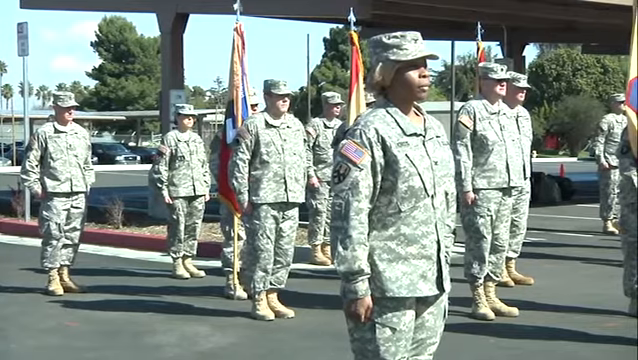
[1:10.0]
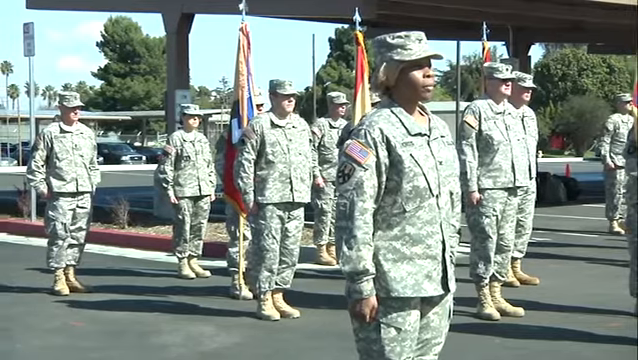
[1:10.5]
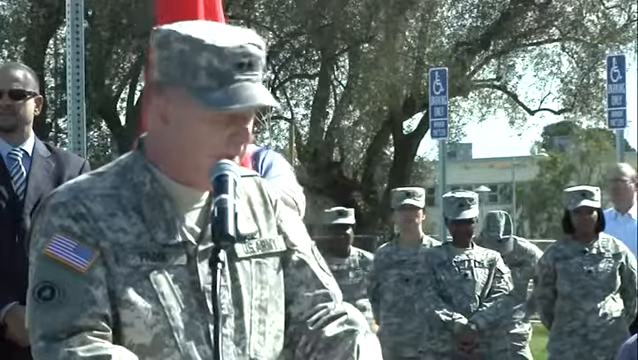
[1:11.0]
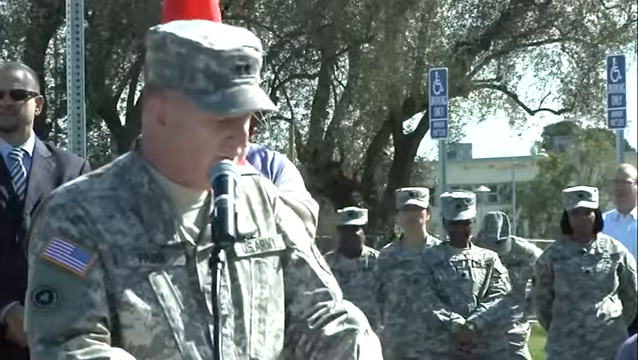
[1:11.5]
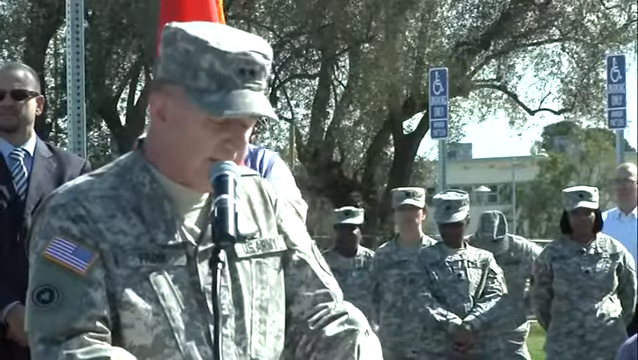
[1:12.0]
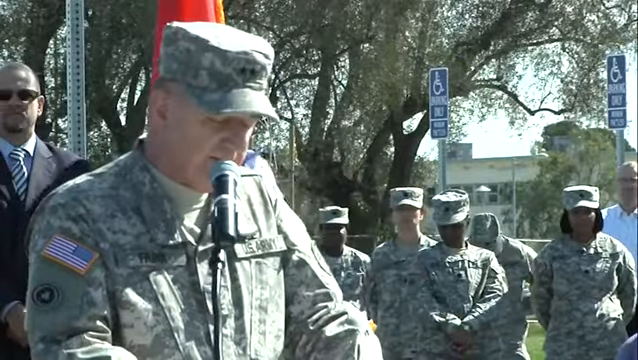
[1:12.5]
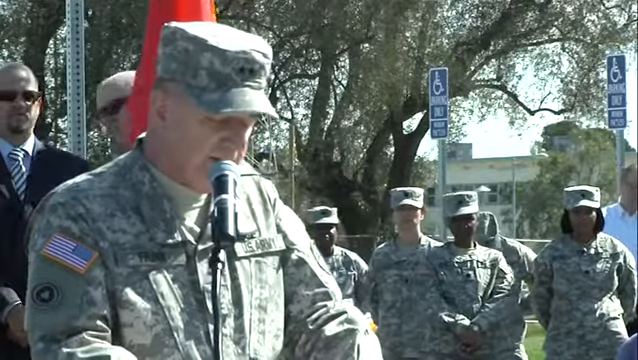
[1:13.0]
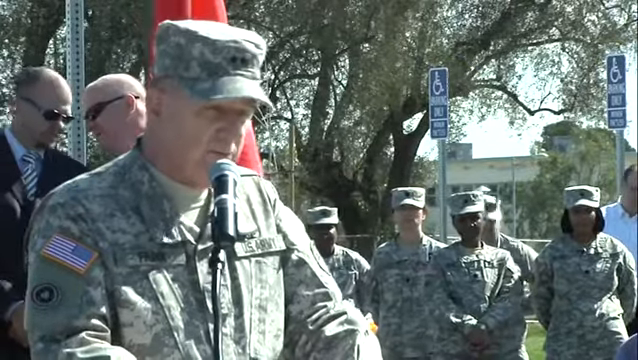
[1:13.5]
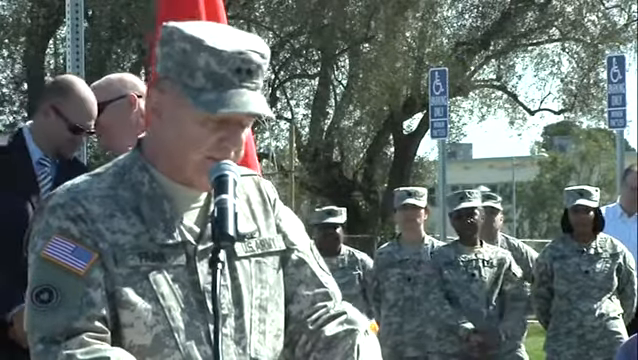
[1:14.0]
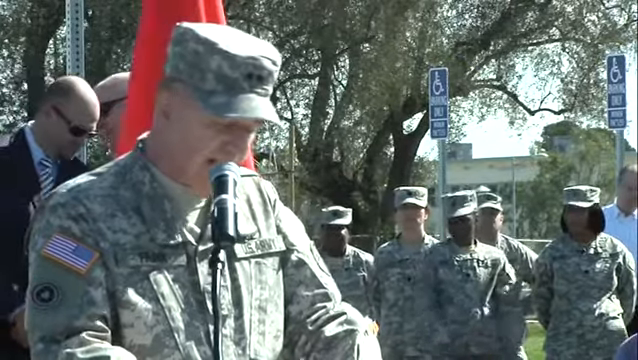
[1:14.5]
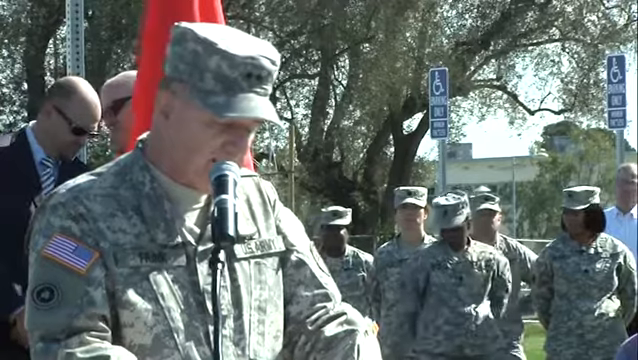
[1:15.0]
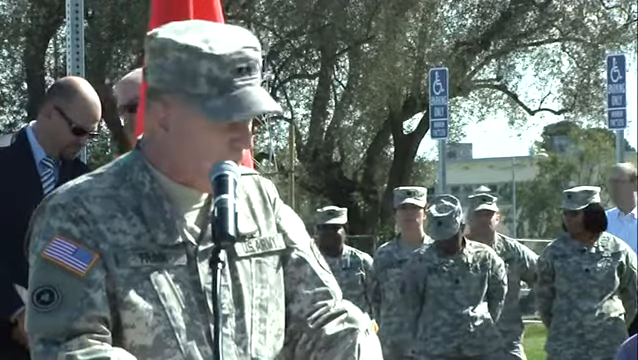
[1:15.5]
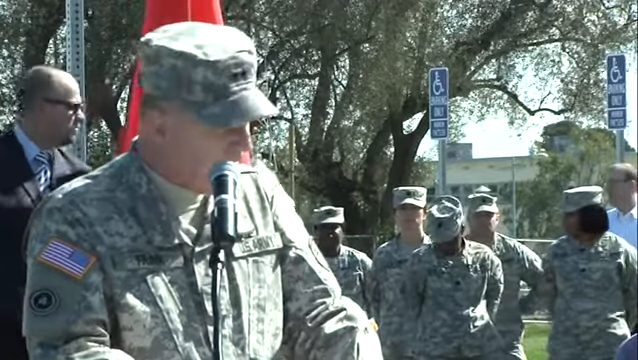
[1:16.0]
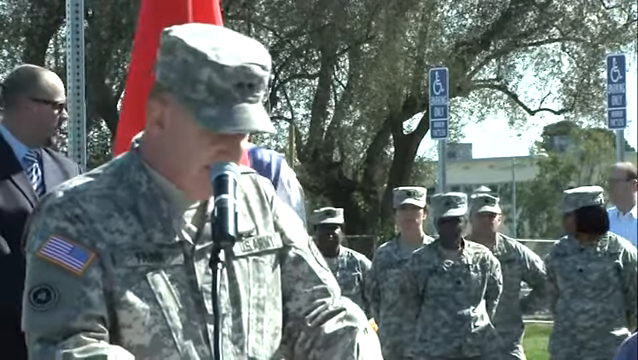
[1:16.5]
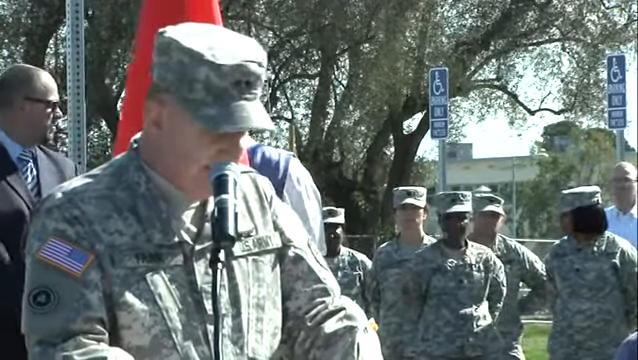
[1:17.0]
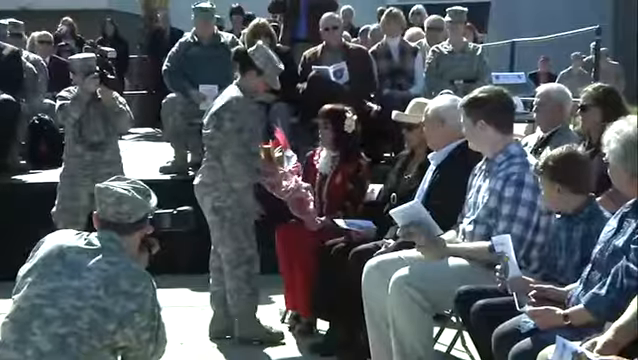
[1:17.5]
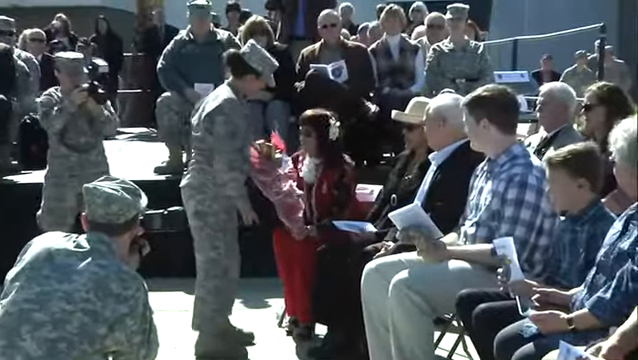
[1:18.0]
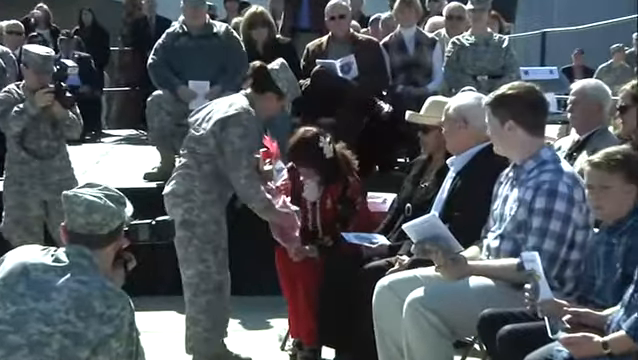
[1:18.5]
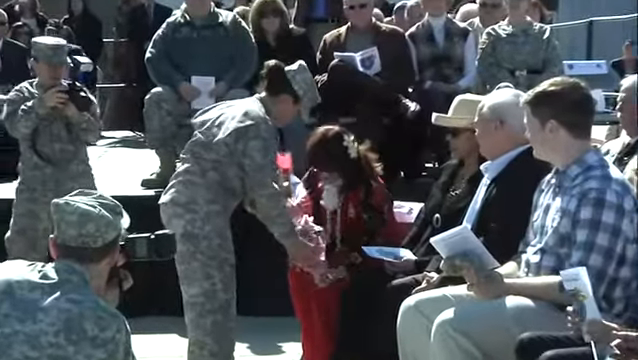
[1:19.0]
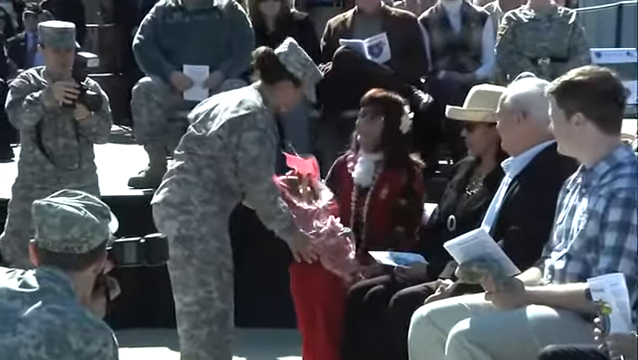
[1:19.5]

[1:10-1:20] A man stands speaking into a microphone, visible from the chest up. He wears a military uniform with a camouflage military shirt, an American flag patch on his right shoulder, and a green camouflage hat with three stars on the front. Behind him is a man in a black suit, white button-up shirt, striped tie and sunglasses, and behind that man, over his left shoulder, people in military uniforms stand listening. A red flag on a flag post is behind the speaking man.